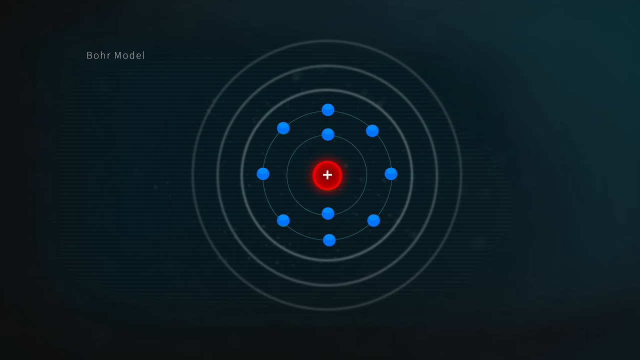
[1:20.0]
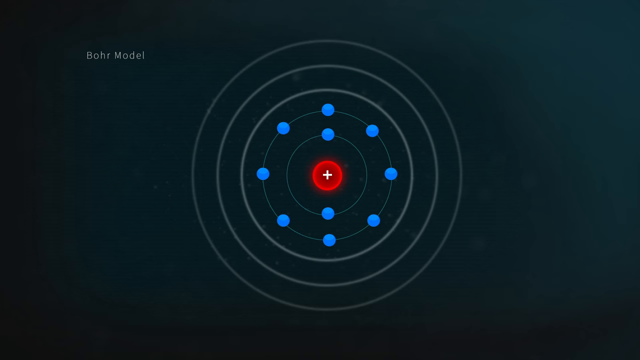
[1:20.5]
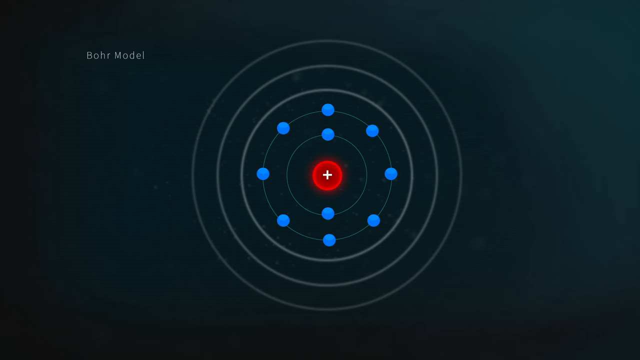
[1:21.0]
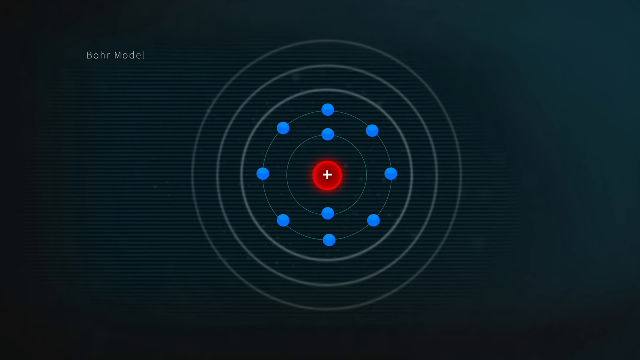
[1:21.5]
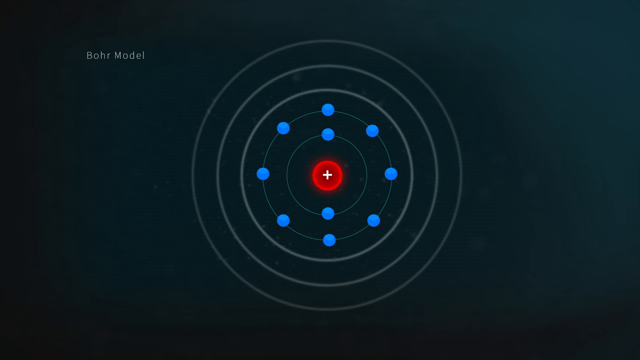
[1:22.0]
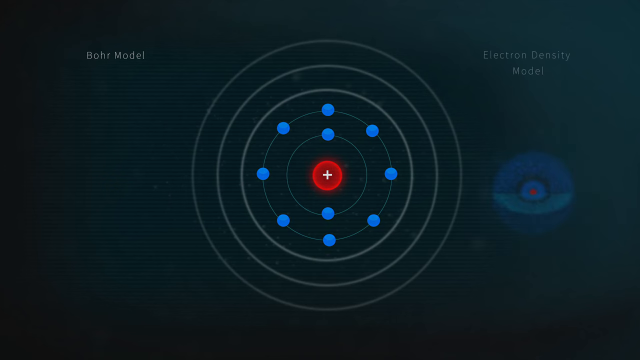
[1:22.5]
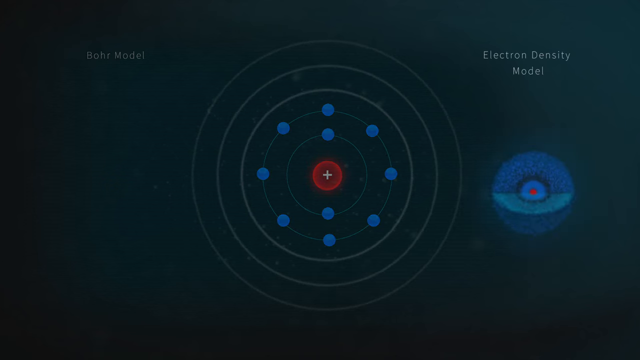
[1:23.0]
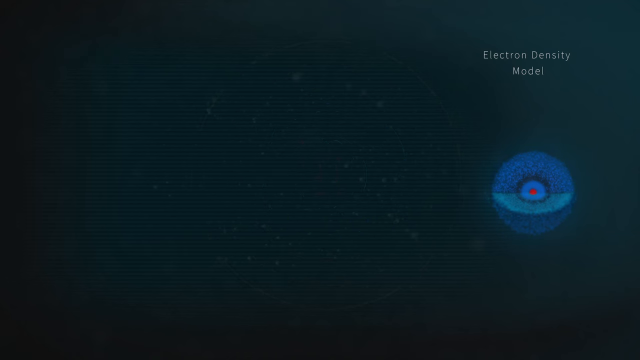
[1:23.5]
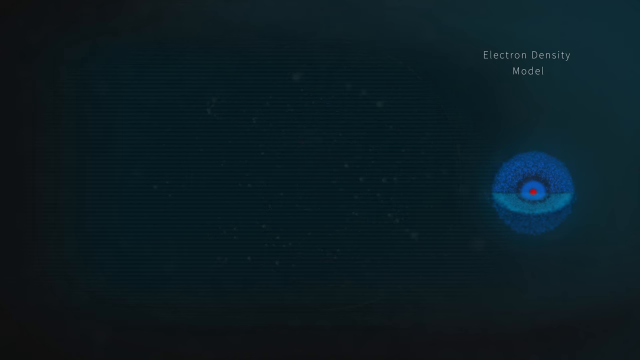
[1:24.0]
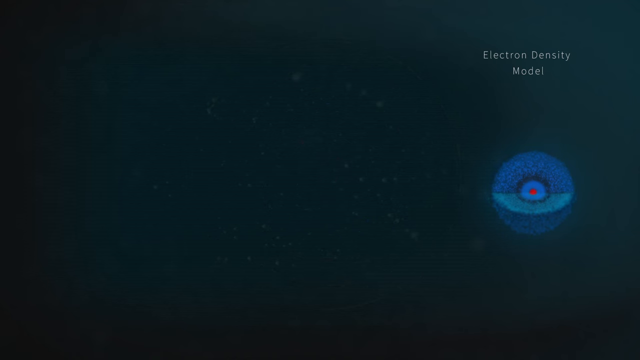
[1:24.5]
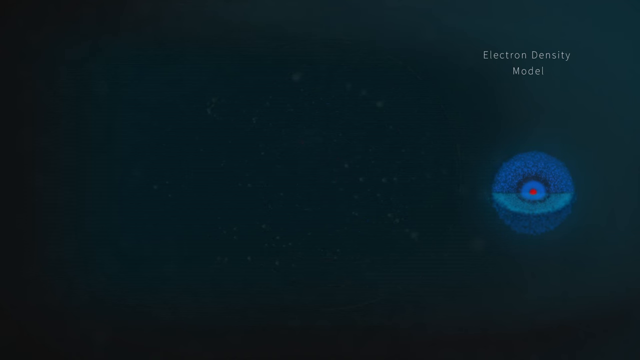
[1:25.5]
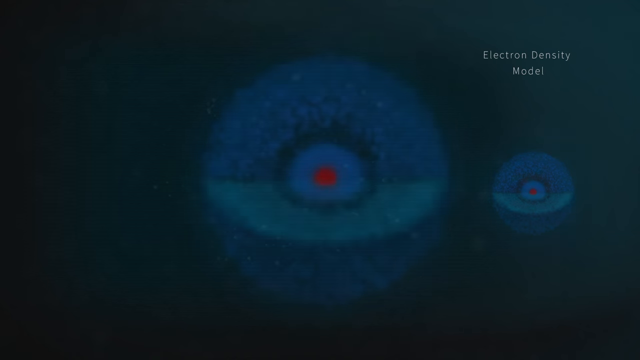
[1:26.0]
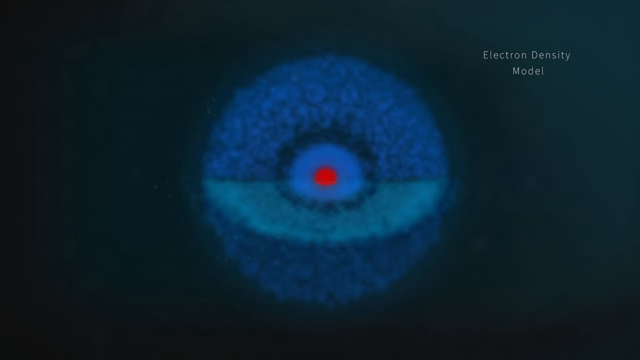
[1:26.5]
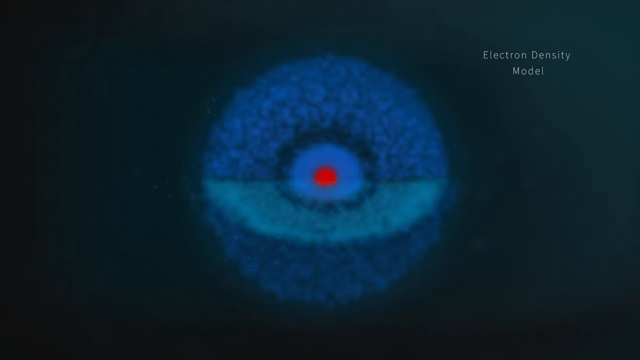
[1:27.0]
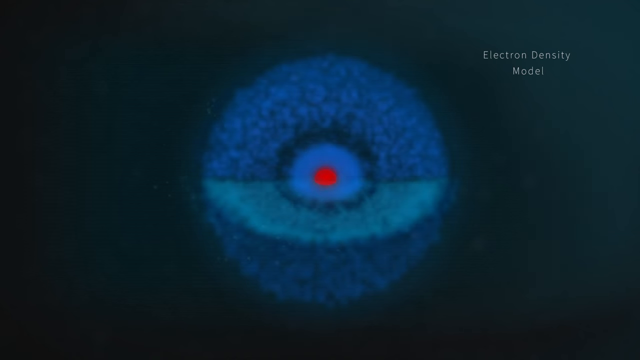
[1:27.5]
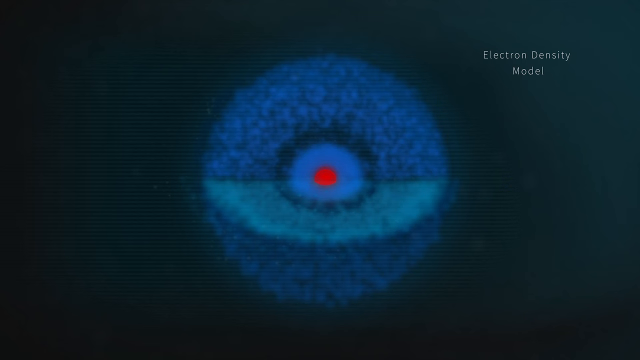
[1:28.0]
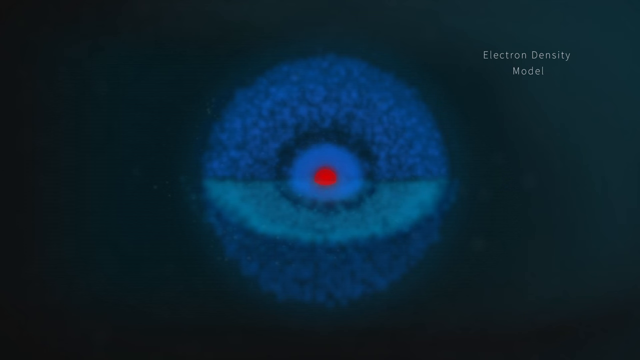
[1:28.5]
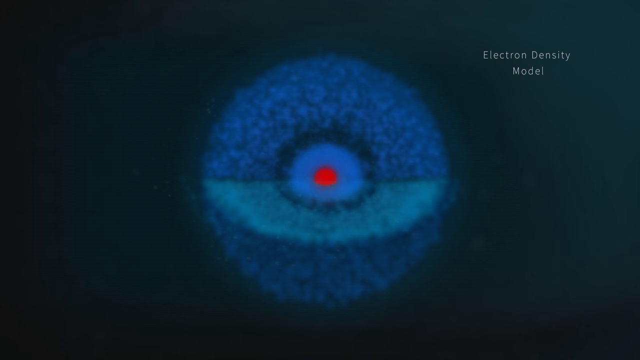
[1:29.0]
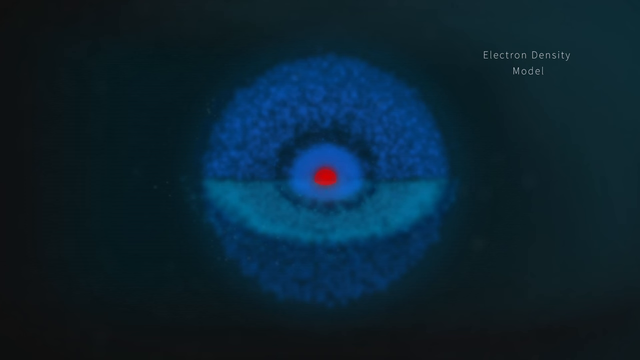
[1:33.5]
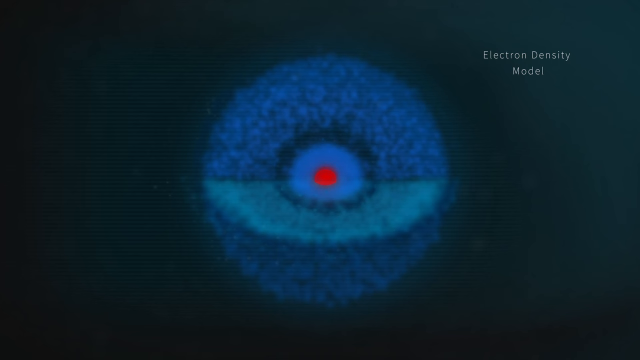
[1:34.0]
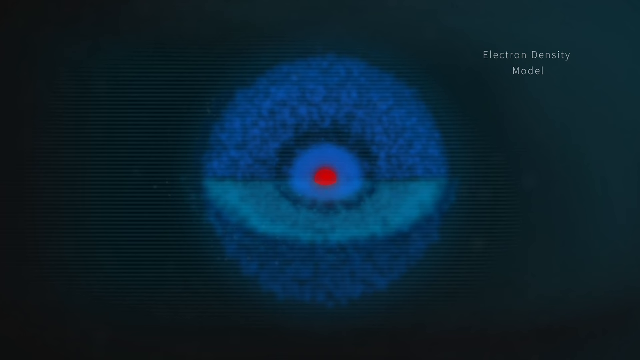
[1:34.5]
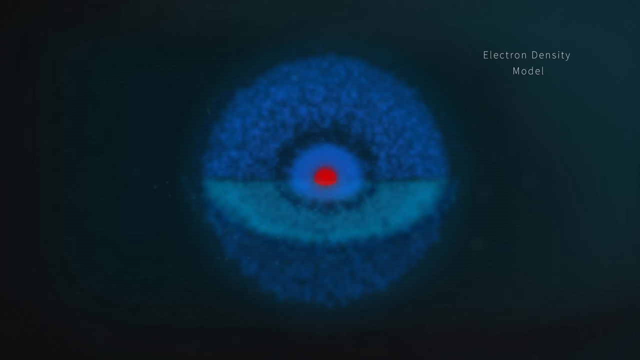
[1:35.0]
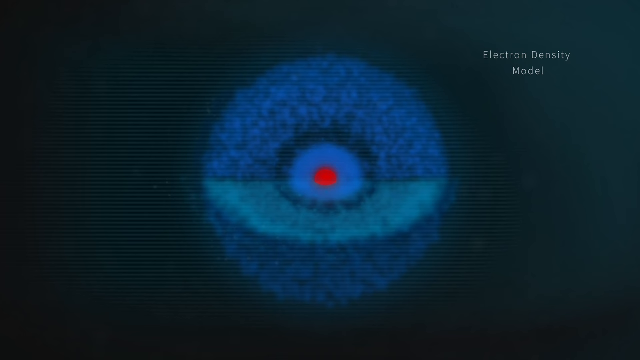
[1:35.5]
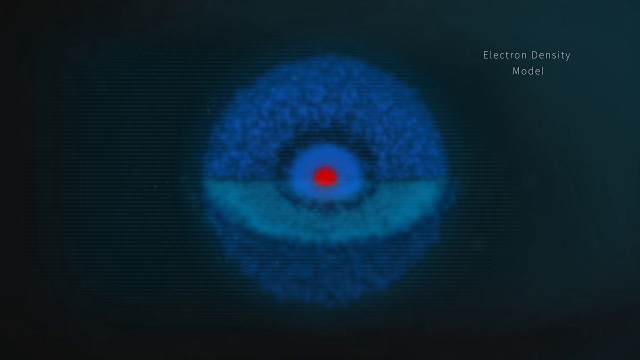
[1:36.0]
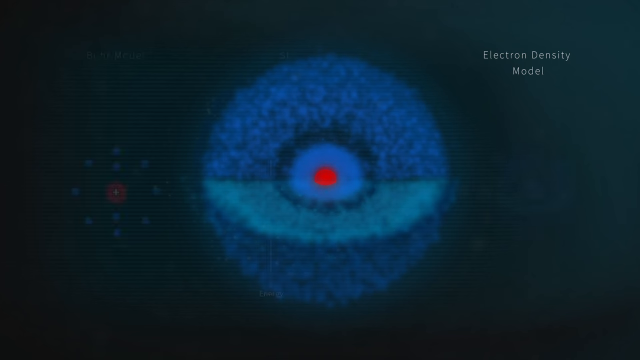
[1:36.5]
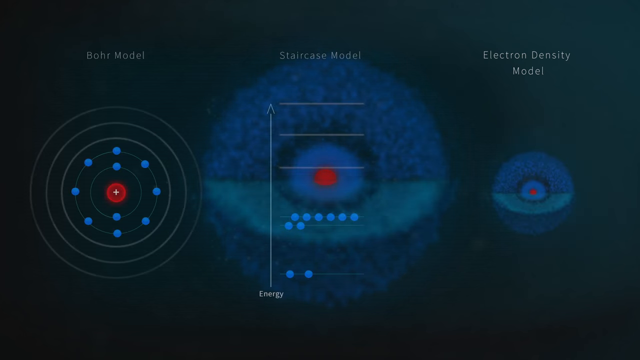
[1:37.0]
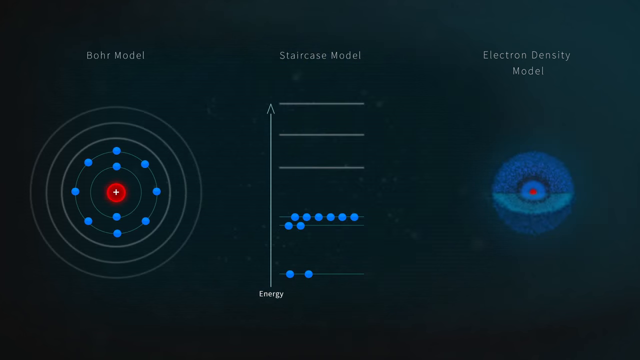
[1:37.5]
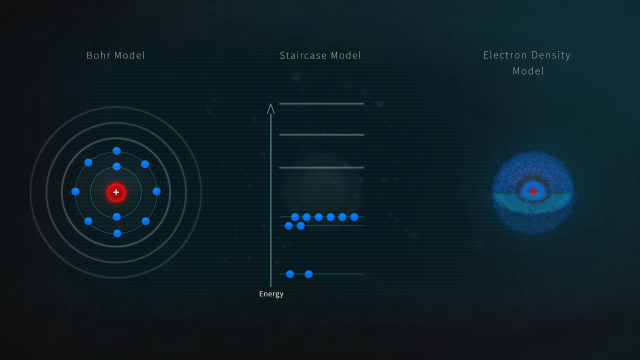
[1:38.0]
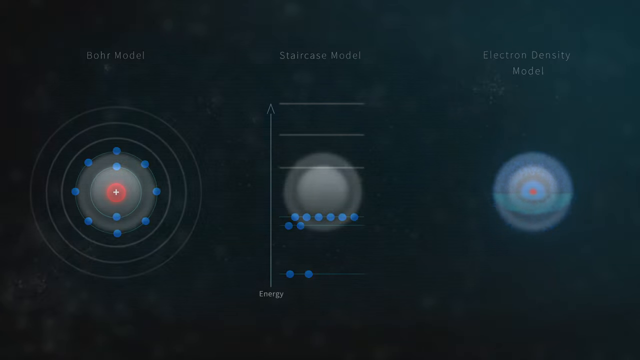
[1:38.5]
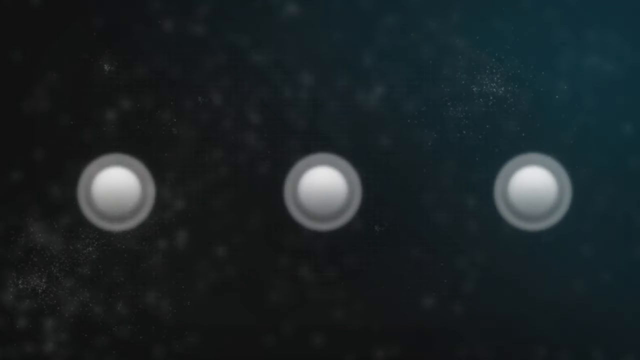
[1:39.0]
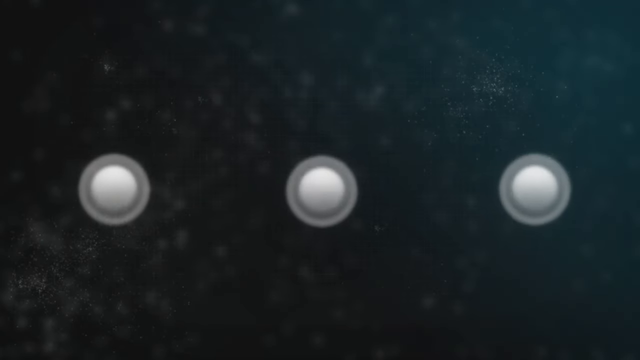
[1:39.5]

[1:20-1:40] The standard model of an atom appears on a black background. The nucleus is a red circle with a yellow dot in the center, and five circles surround it going outward; the two circles closest to the nucleus have blue dots, two in the first and eight in the second. This fades out, revealing a blue sphere with a section cut out on the left-hand side of the screen, with layers visible all the way down to a red dot. The diagram fades out and reappears larger in the center of the screen, labeled in white as the "electron density model". The screen then fades and shows all three diagrams: the standard model on the left, the staircase model in the middle, and the electron density model on the right. Each diagram fades and is replaced by a white circle, leaving a black screen with three white circles in a line across it.